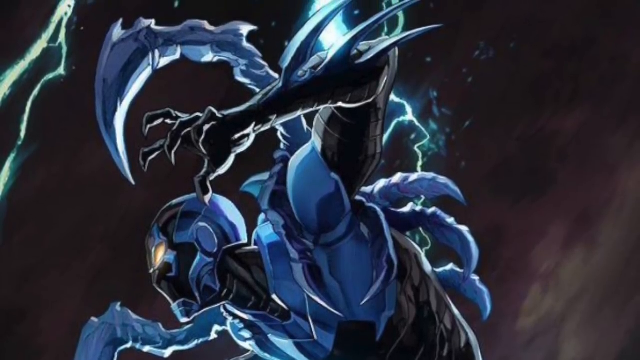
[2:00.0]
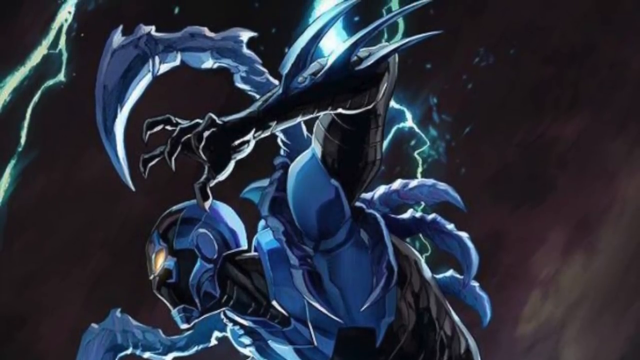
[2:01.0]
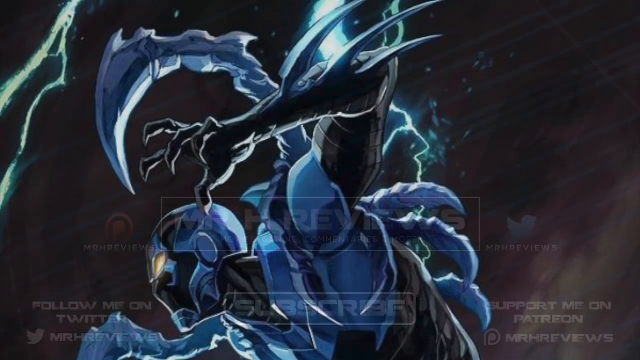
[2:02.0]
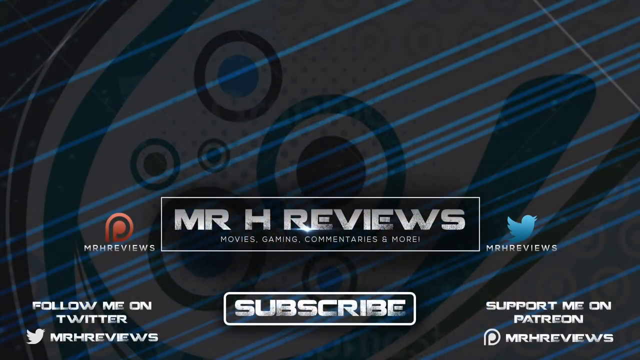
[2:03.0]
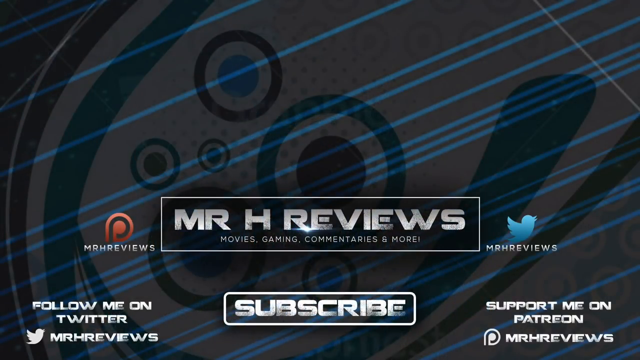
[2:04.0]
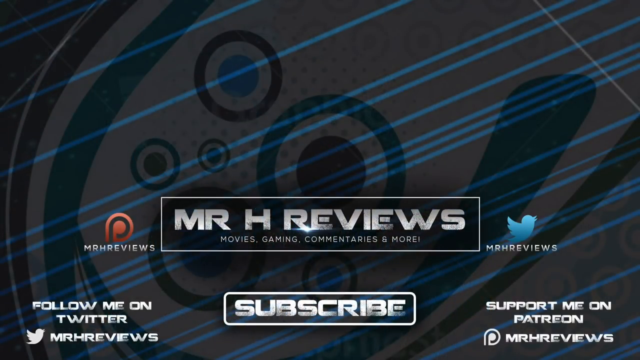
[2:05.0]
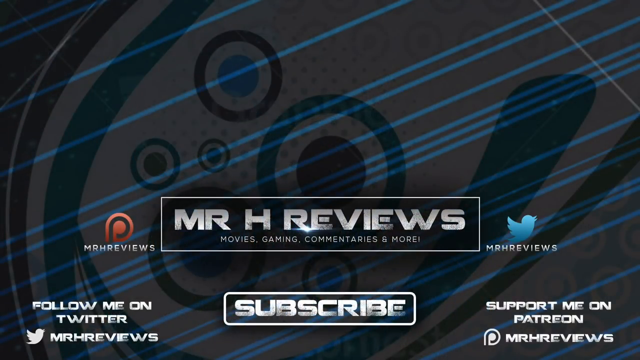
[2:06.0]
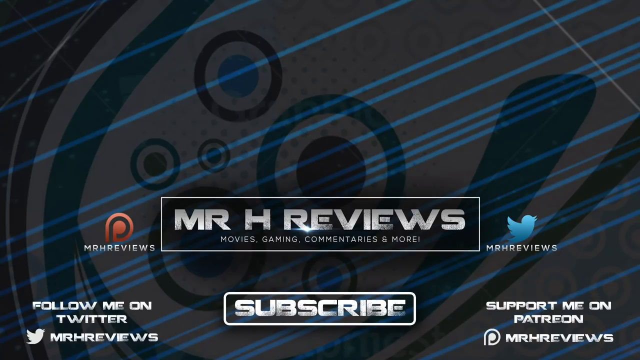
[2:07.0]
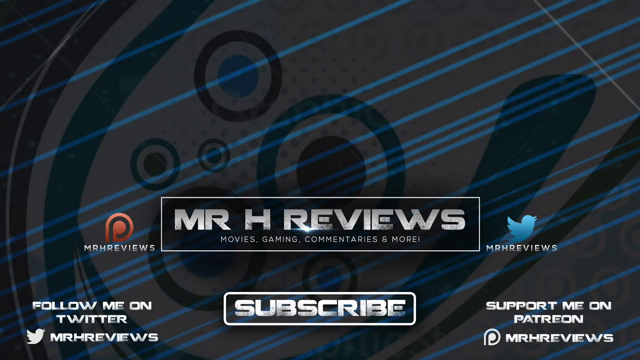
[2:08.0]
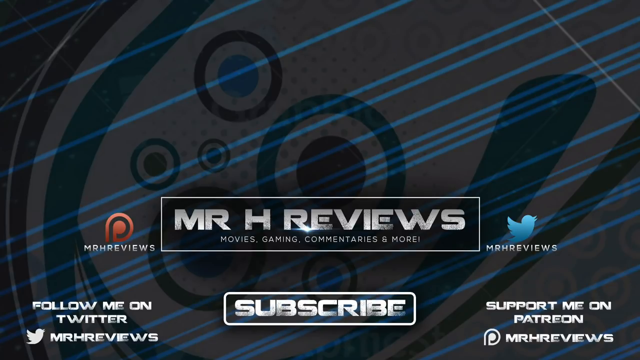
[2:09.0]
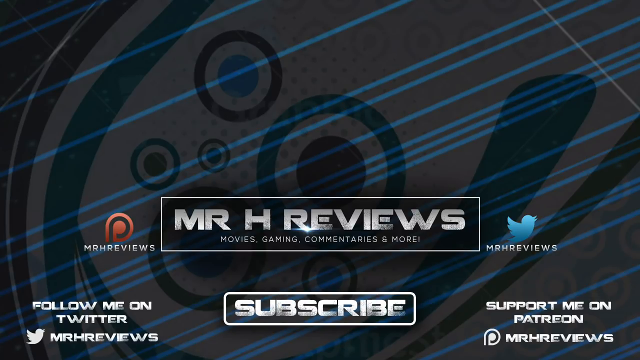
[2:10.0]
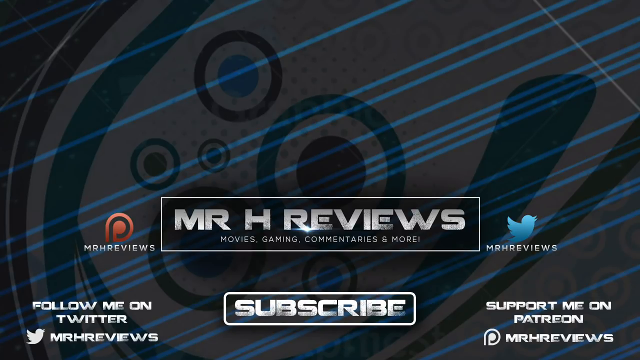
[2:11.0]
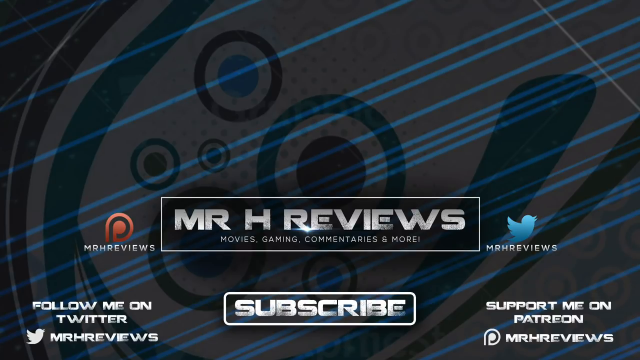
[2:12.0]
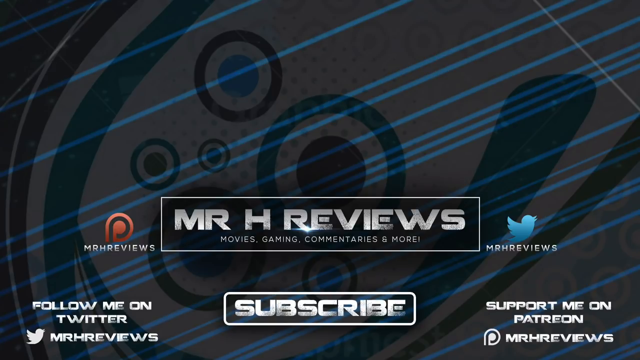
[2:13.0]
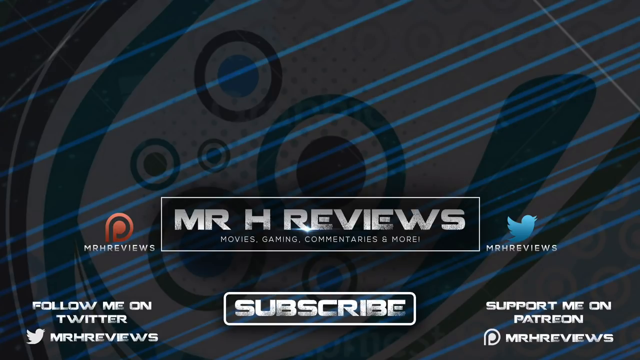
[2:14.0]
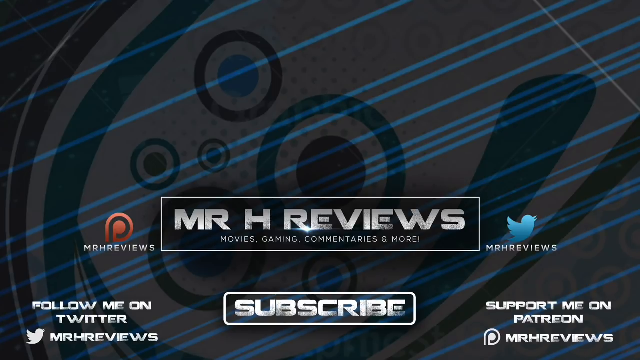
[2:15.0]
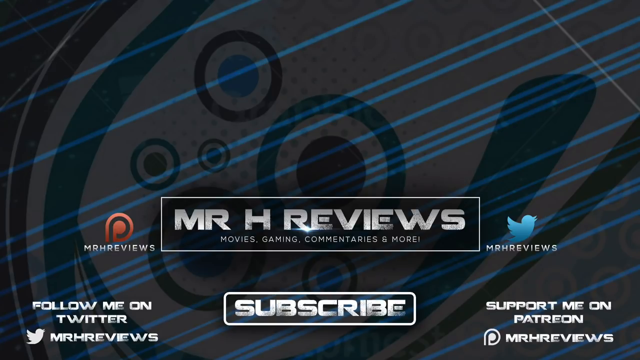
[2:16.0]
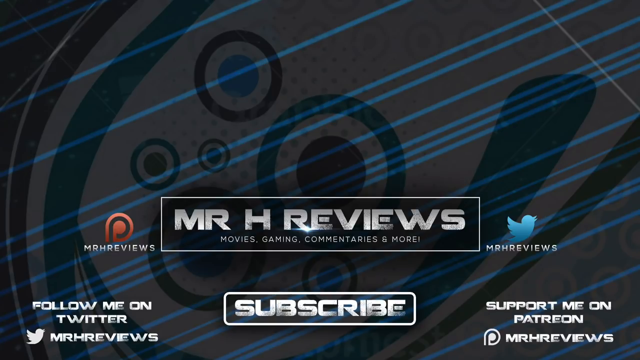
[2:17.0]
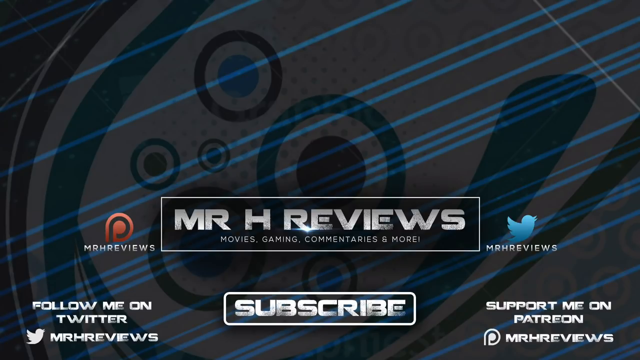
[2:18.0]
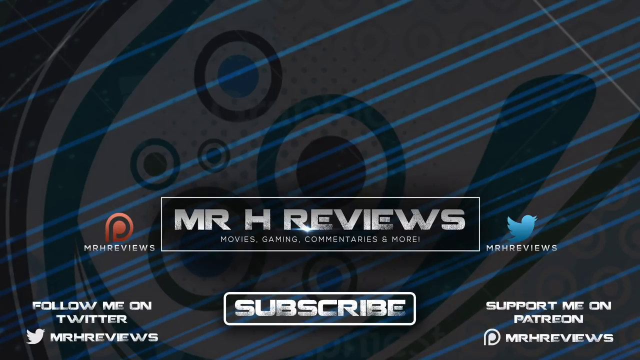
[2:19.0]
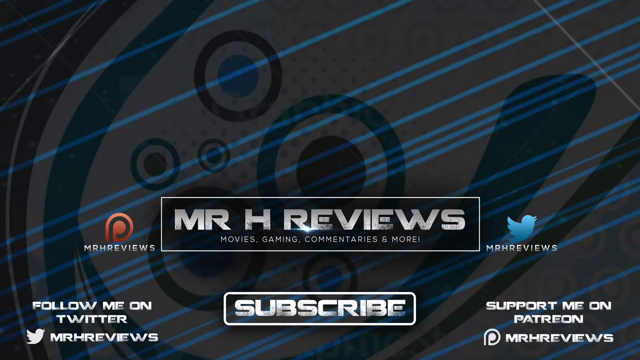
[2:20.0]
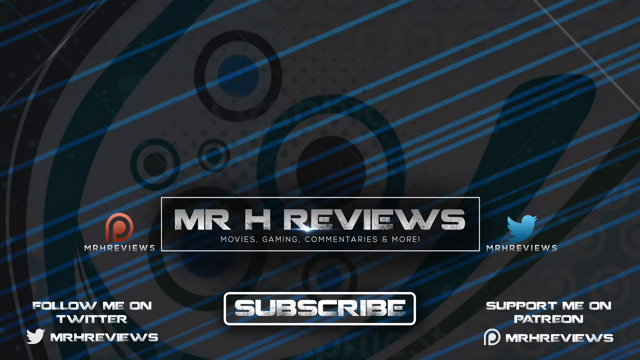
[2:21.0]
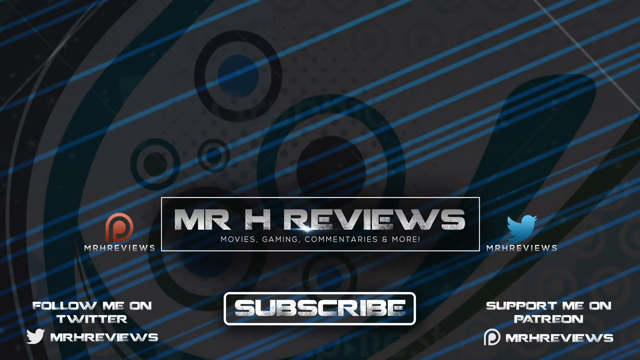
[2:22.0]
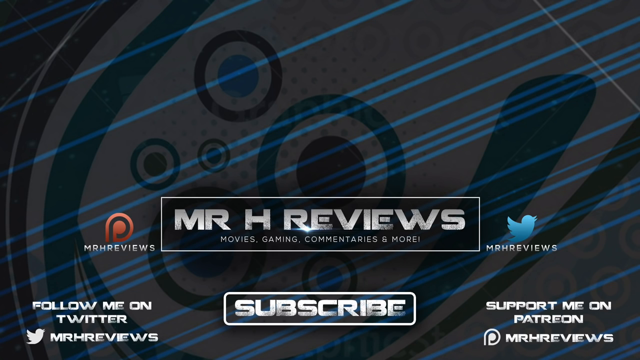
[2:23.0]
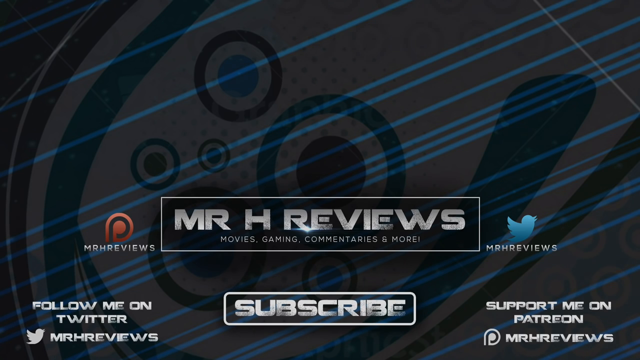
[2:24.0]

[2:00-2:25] The powerful character in the cyan and black suit charges towards something in space, his arms and hands outstretched and clawed. The camera moves slowly upwards without revealing much more. The video then appears to end with an end screen: a big logo saying "Mr H Reviews", with "movies, gaming, commentaries and more" underneath. On one side of the logo is what looks like the Mr H Reviews logo, a sort of swirly orange thing, and on the right side is the Twitter or X symbol. Below that is a big logo that says "SUBSCRIBE" in capital letters, with "follow me on Twitter" and "support me on Patreon" on either side of it. The backdrop is very patterned and abstract and looks a bit metallic.